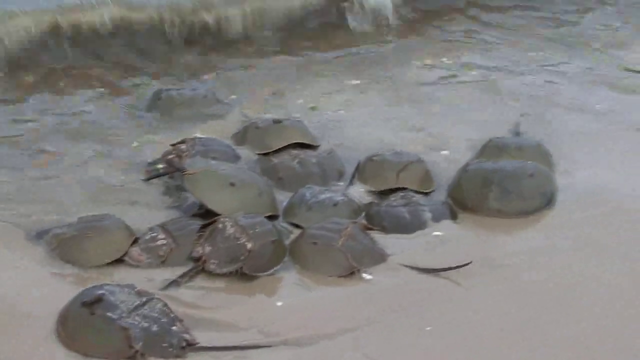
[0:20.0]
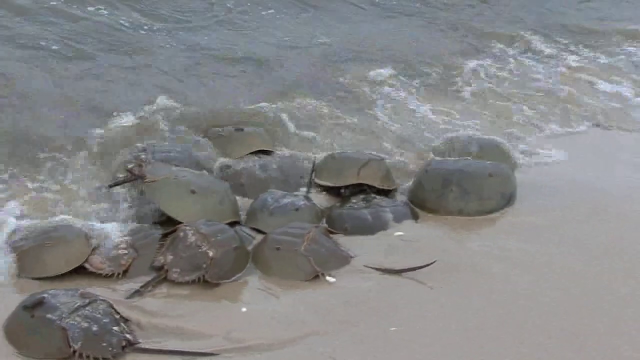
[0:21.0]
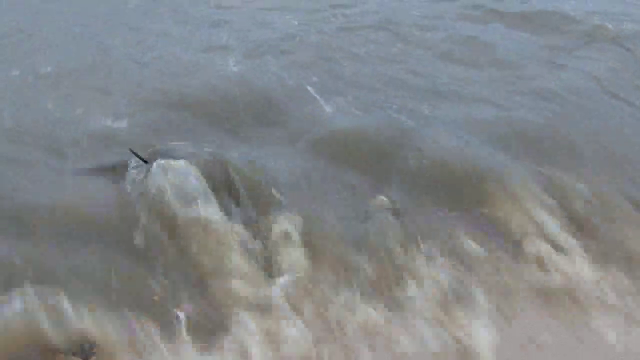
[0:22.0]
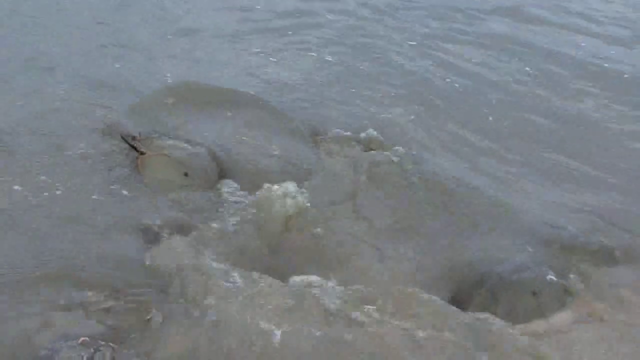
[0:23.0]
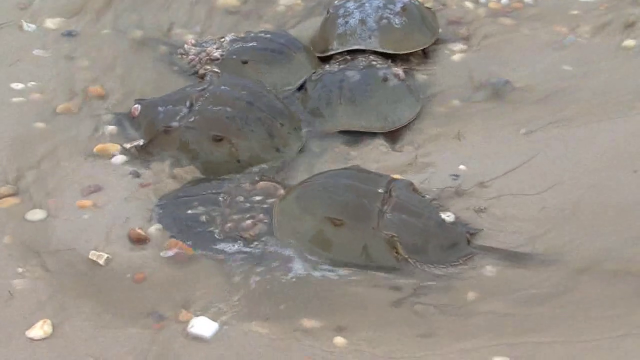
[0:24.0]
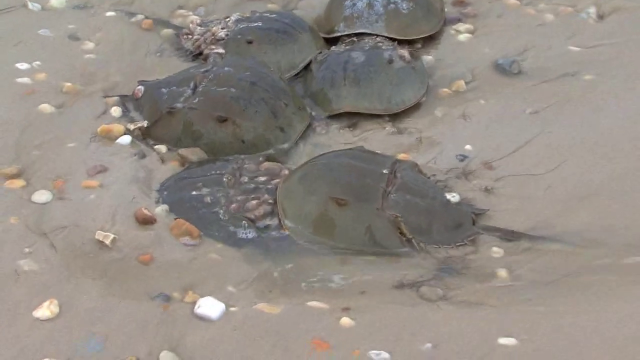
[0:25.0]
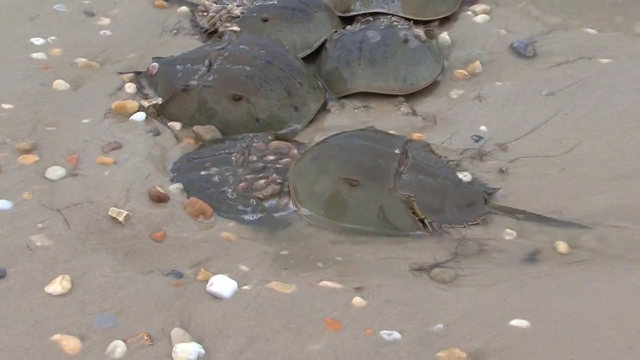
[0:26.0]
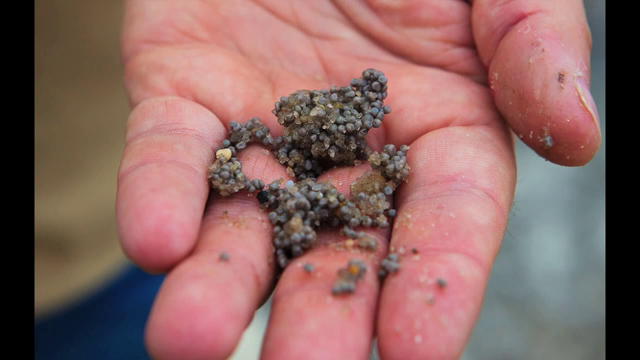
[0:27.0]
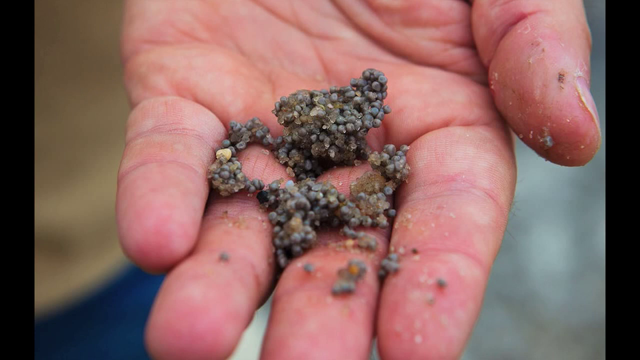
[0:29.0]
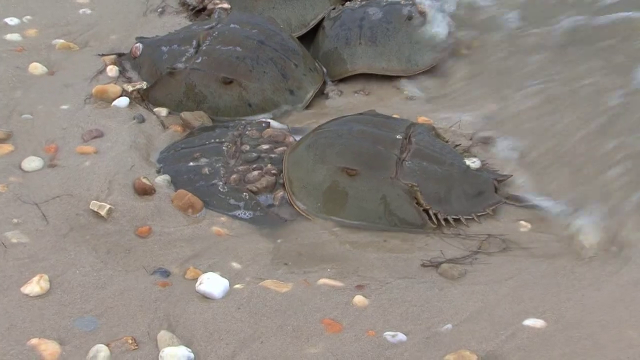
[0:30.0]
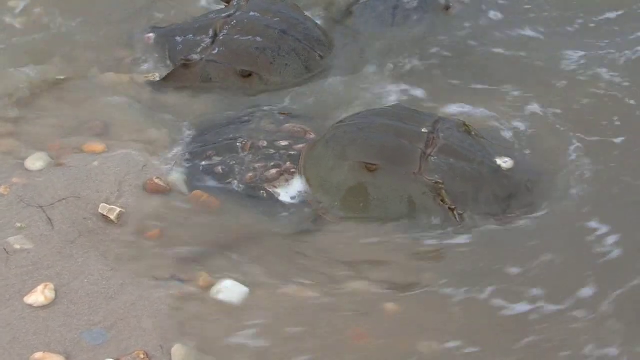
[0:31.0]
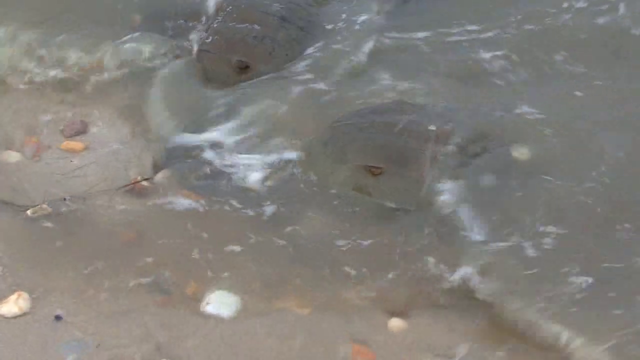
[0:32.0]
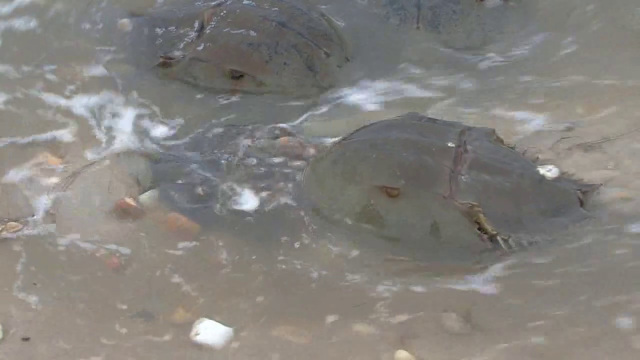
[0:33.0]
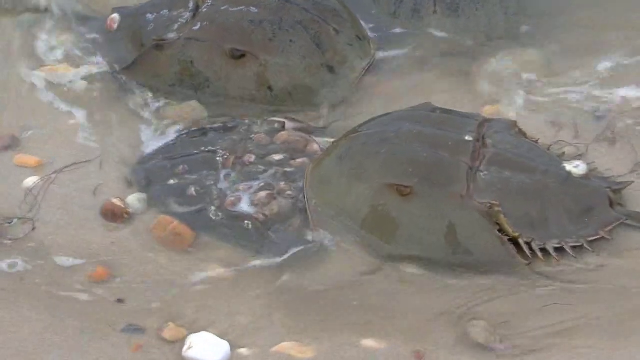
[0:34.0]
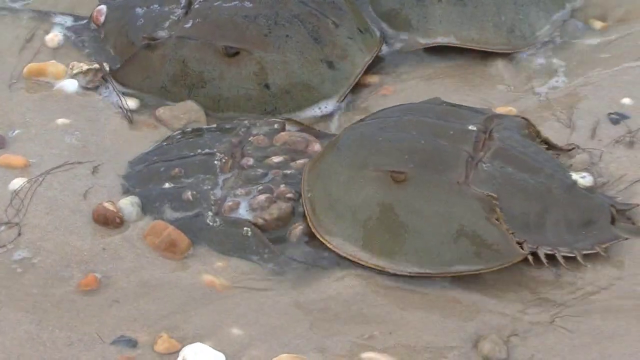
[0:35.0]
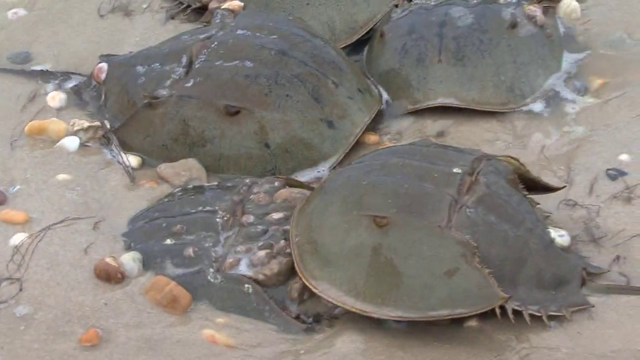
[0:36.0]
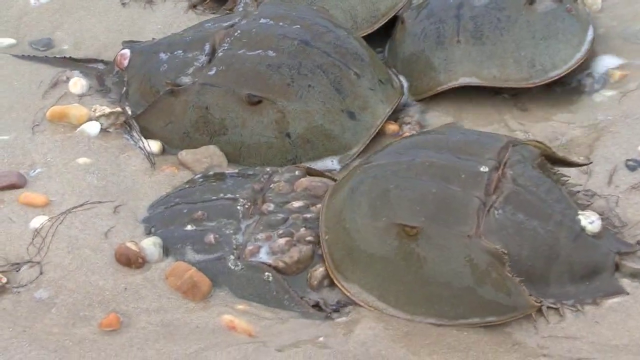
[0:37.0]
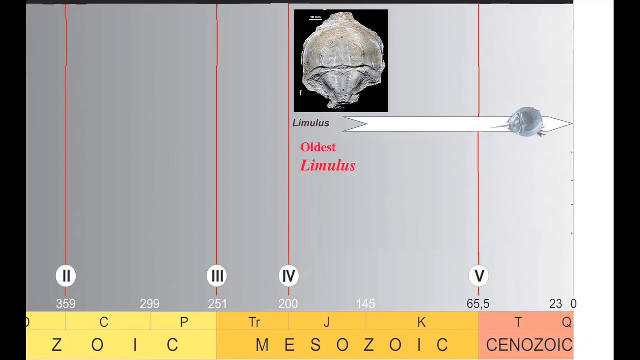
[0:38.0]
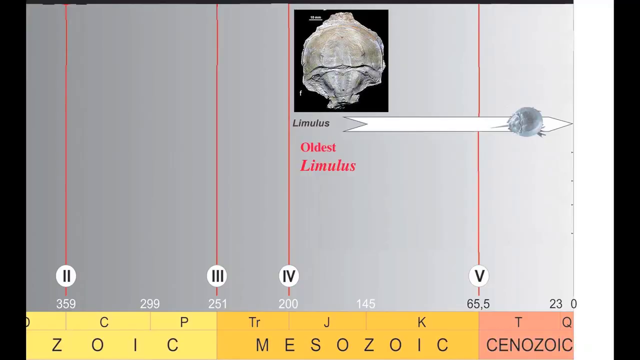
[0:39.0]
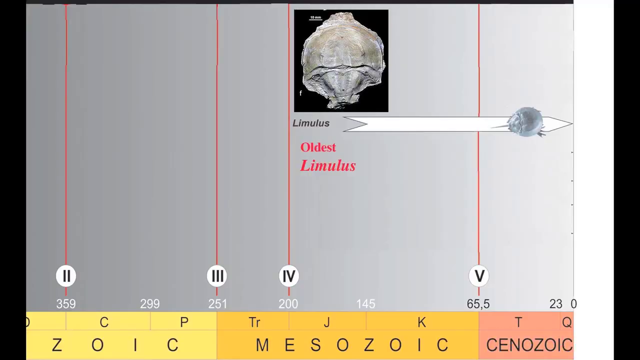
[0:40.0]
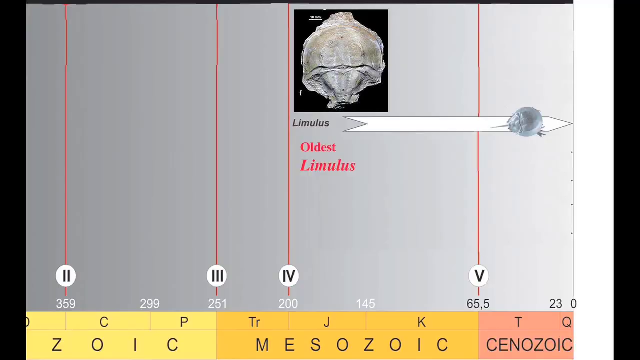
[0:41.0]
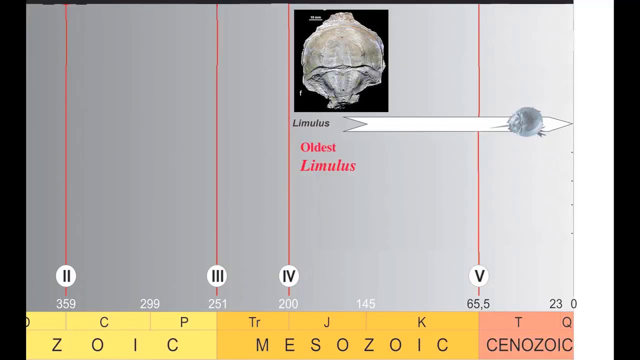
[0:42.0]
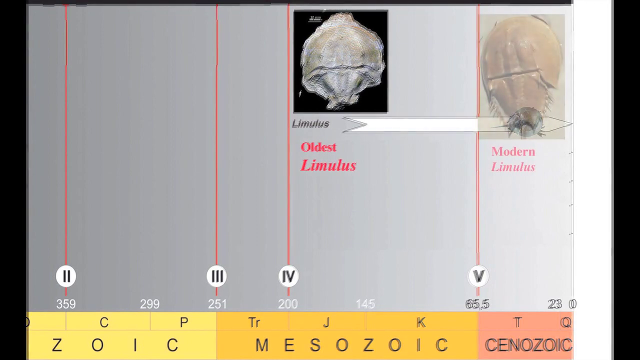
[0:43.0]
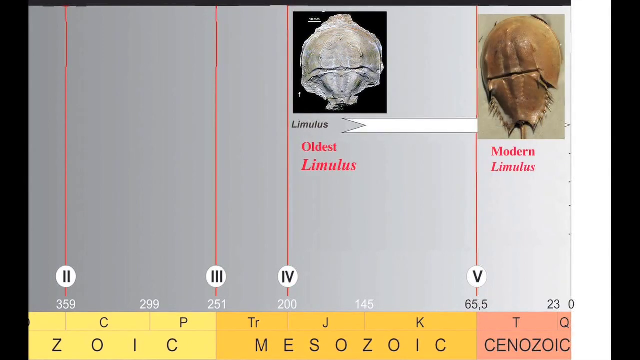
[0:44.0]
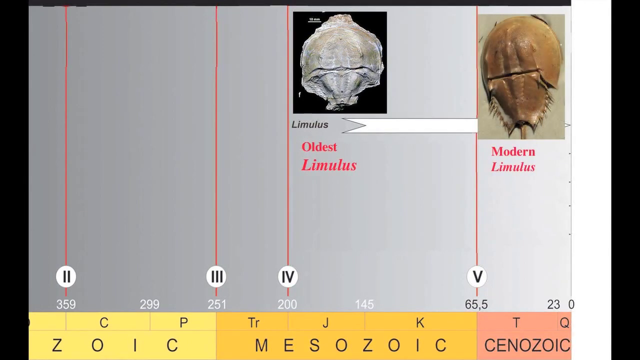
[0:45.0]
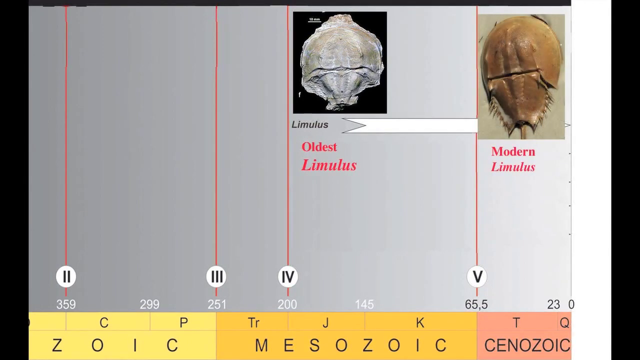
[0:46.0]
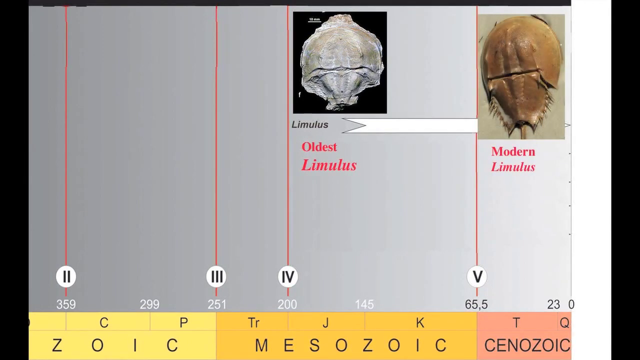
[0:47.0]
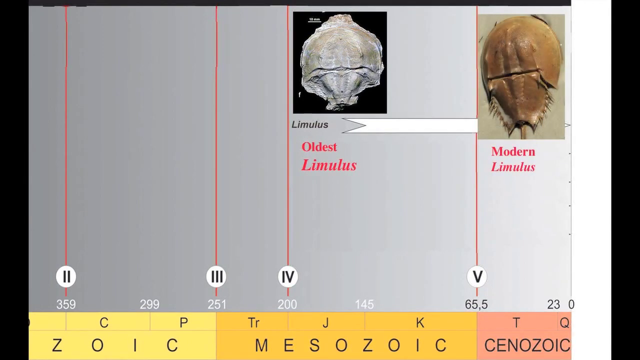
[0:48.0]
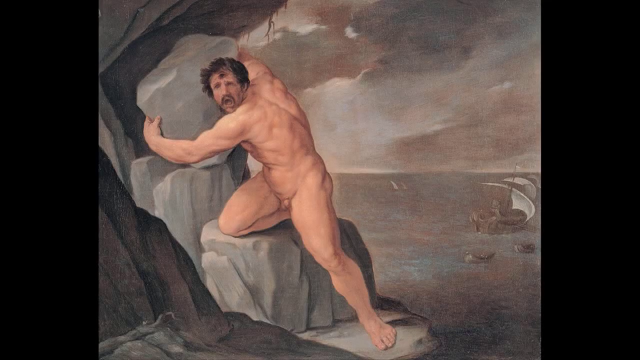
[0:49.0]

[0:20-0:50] The same group of horseshoe crabs is submerged in tidewater, with one of their tails pointing upward. Another, smaller group of about six appears to be feeding on the sand. A close-up shows a person's hand with dried sand pebbles on it, followed by another close-up of the feeding horseshoe crabs, one of which is burrowing in the sand. A chart or timeline then shows the first fossilized horseshoe crab, with the oldest found about 200 million years ago during the Mesozoic period, and indicates that after many millions of years the horseshoe crab did not really evolve. The video then cuts to a painting of a Greek mythology figure after whom the horseshoe crab is named.